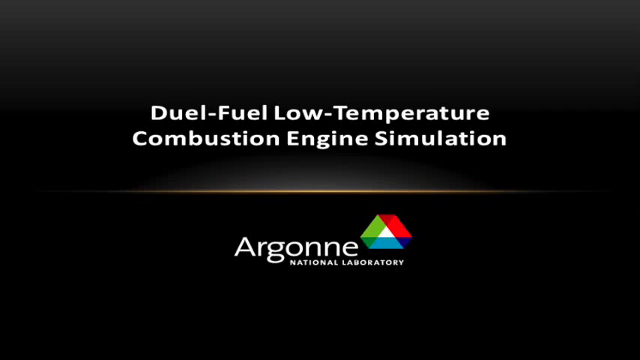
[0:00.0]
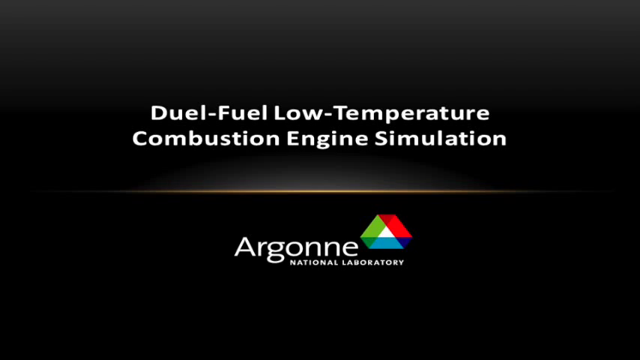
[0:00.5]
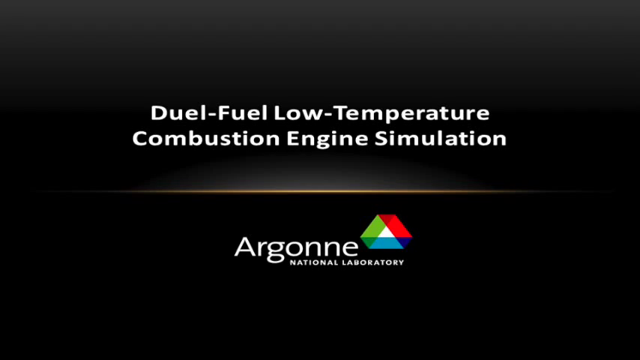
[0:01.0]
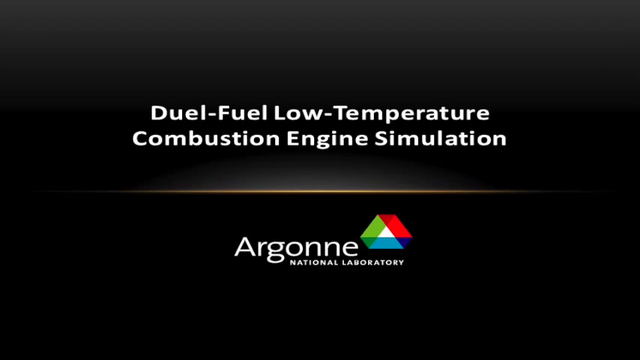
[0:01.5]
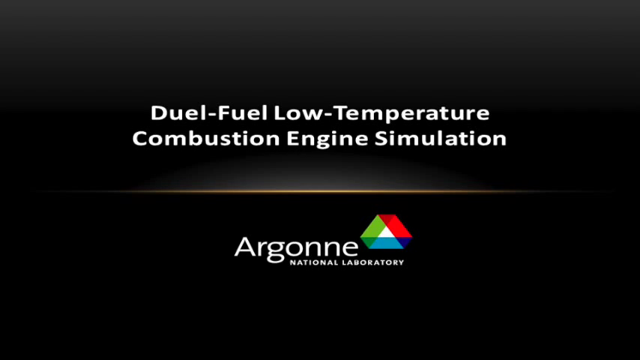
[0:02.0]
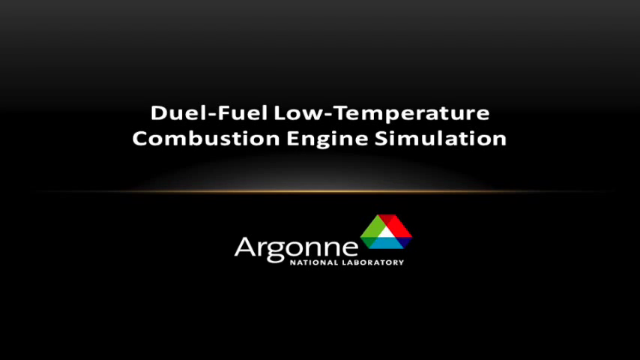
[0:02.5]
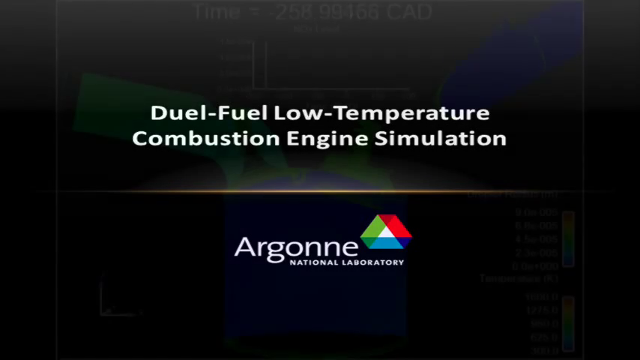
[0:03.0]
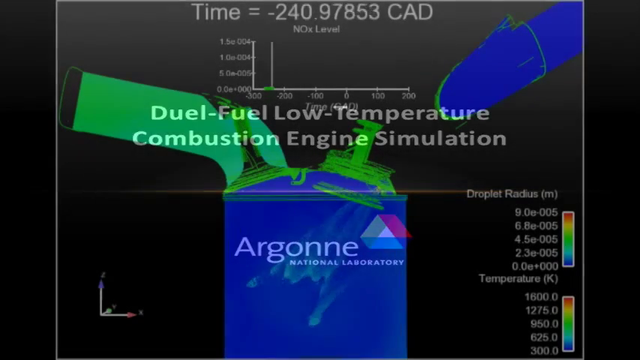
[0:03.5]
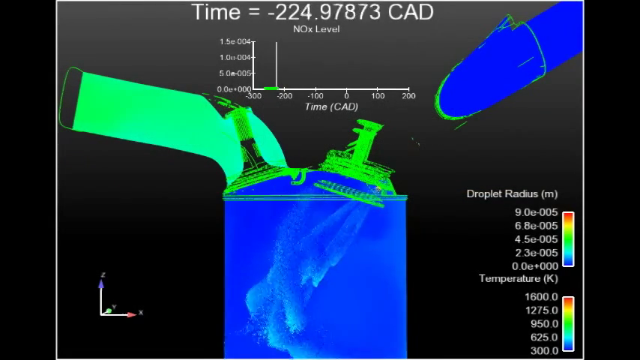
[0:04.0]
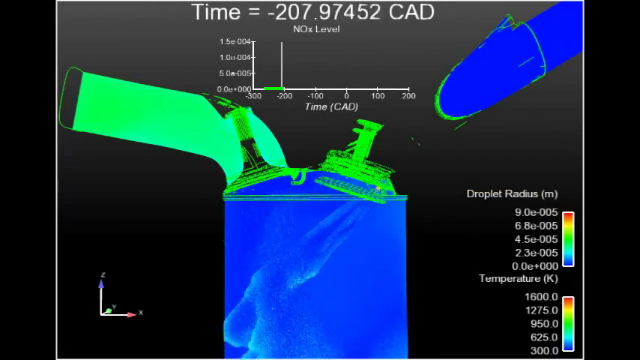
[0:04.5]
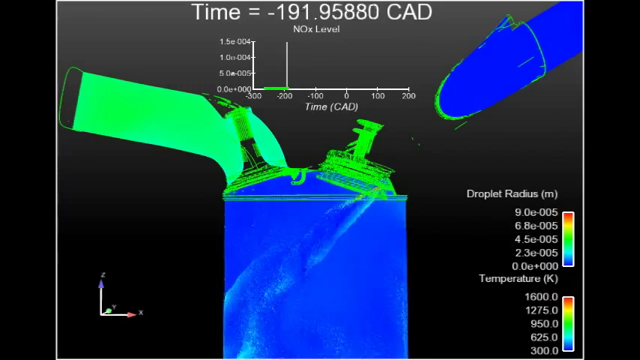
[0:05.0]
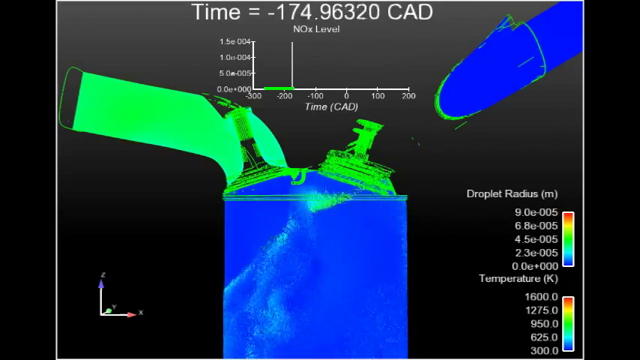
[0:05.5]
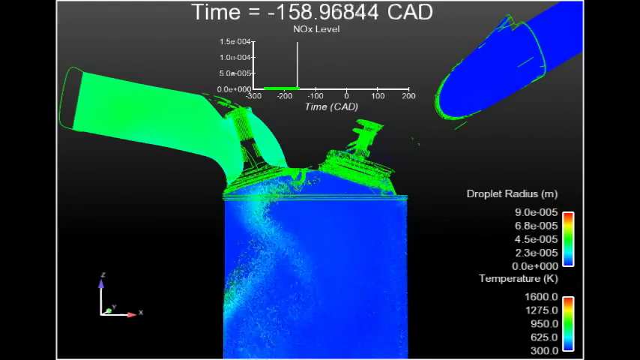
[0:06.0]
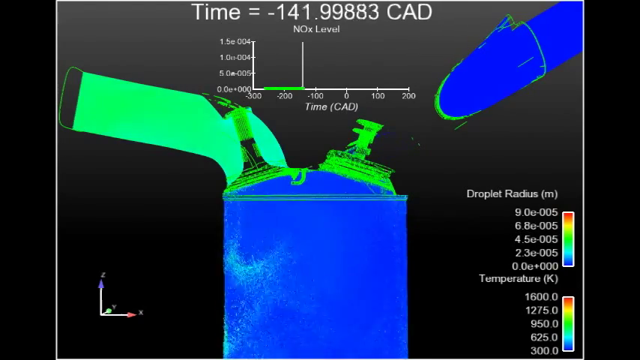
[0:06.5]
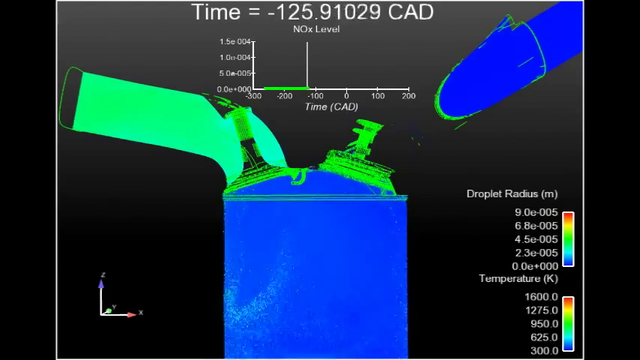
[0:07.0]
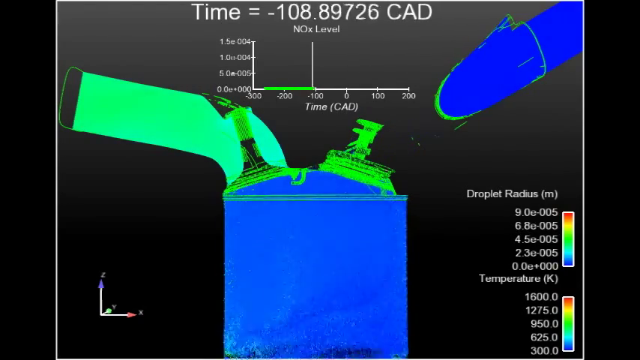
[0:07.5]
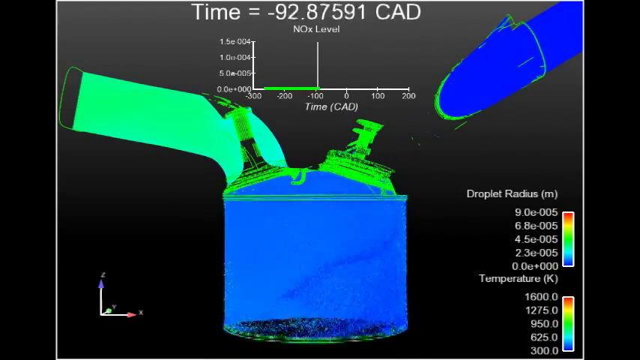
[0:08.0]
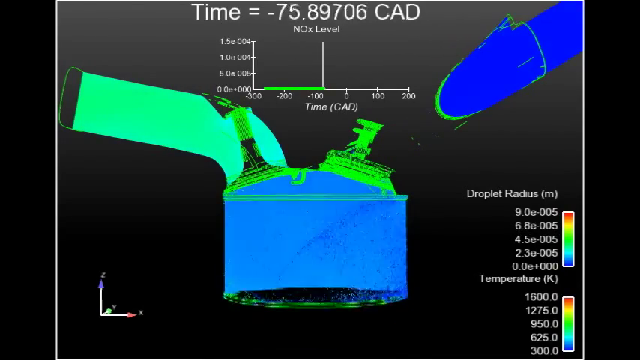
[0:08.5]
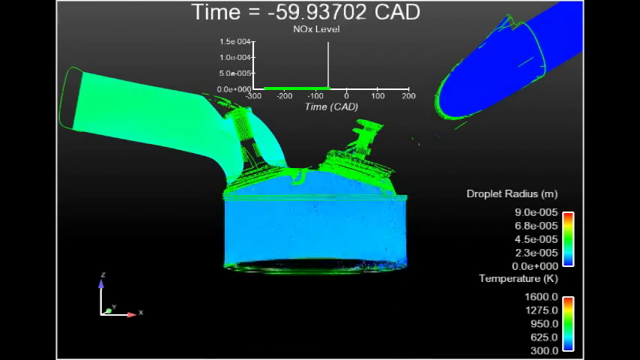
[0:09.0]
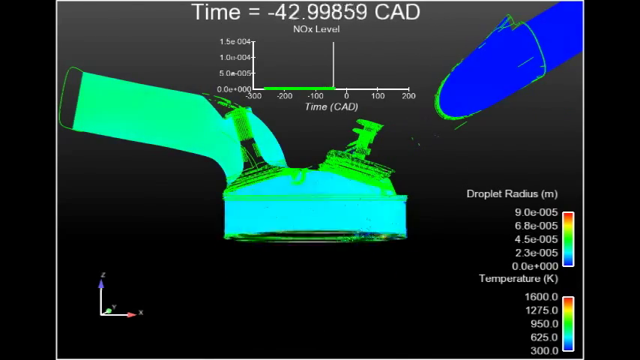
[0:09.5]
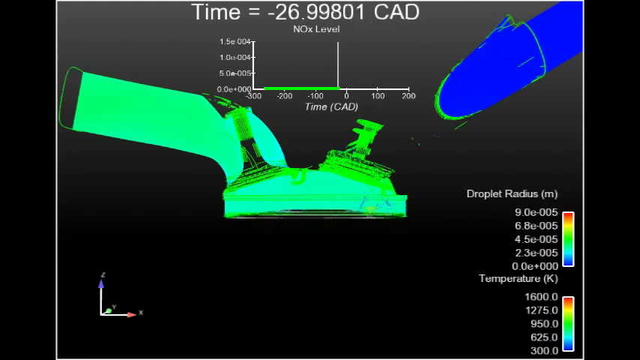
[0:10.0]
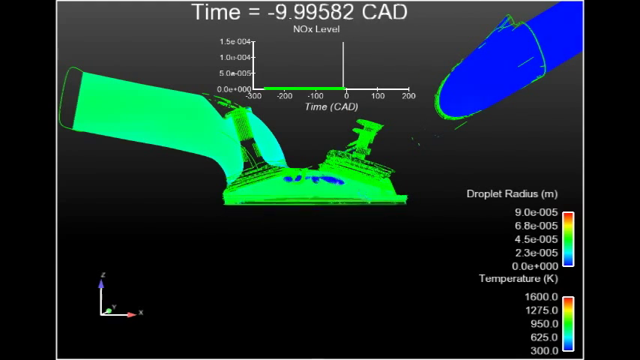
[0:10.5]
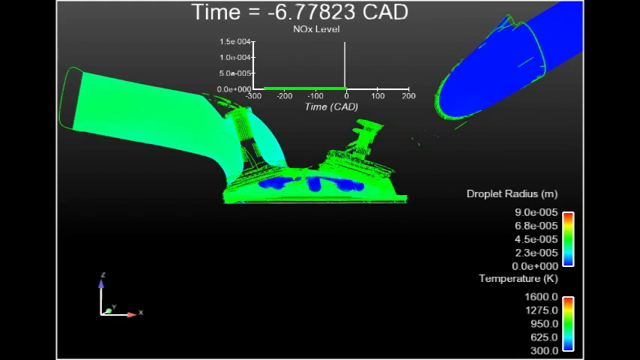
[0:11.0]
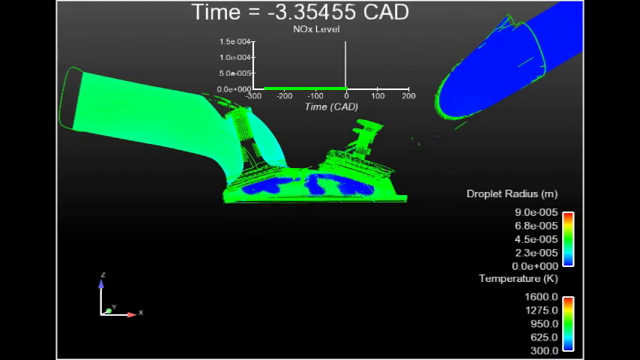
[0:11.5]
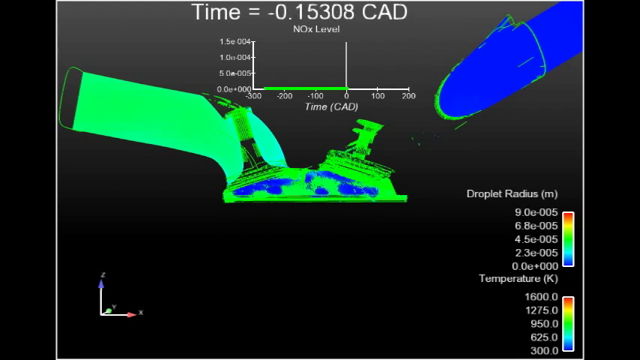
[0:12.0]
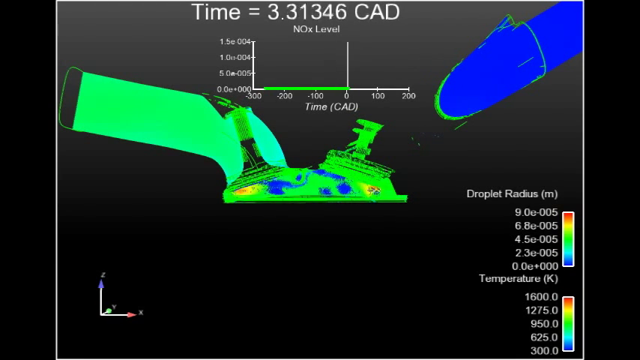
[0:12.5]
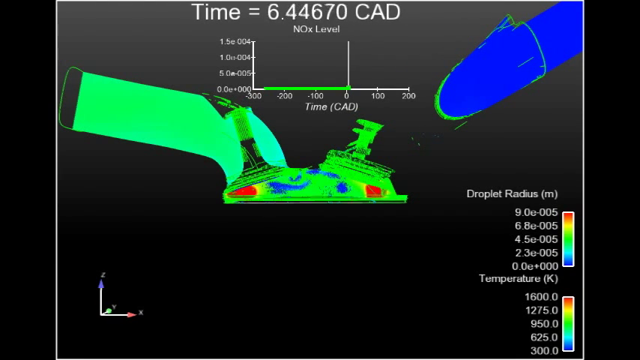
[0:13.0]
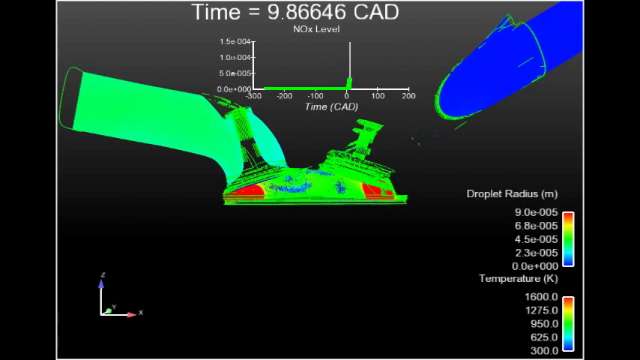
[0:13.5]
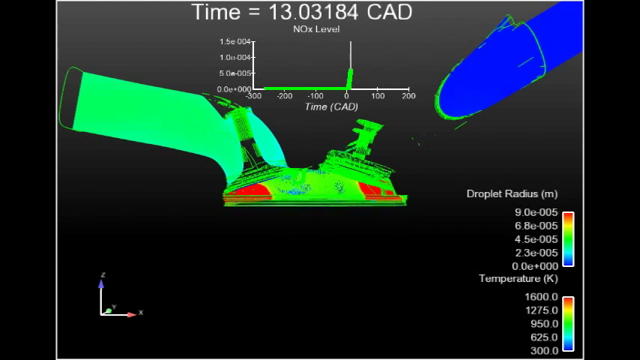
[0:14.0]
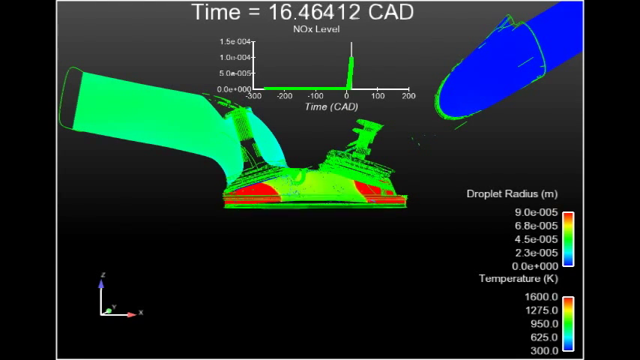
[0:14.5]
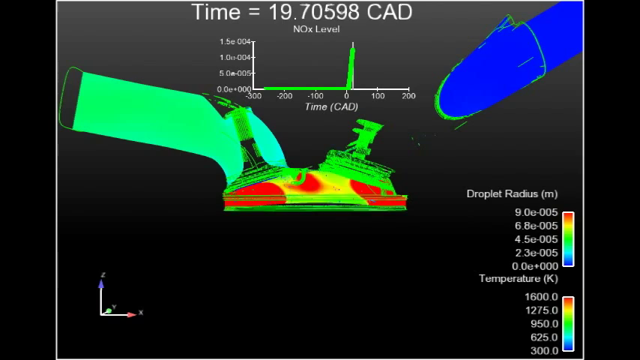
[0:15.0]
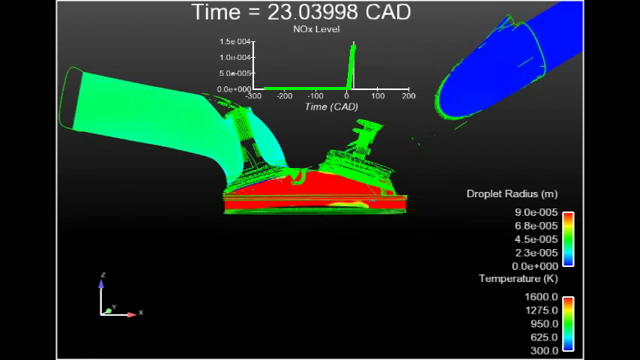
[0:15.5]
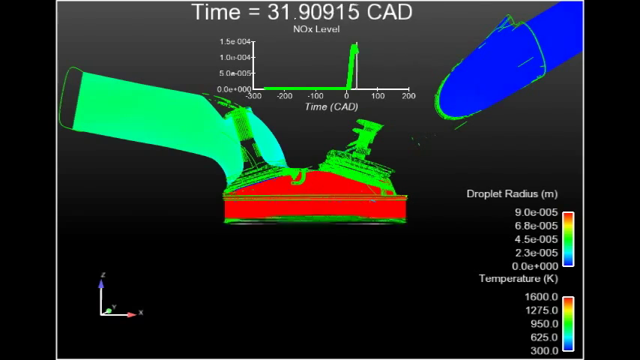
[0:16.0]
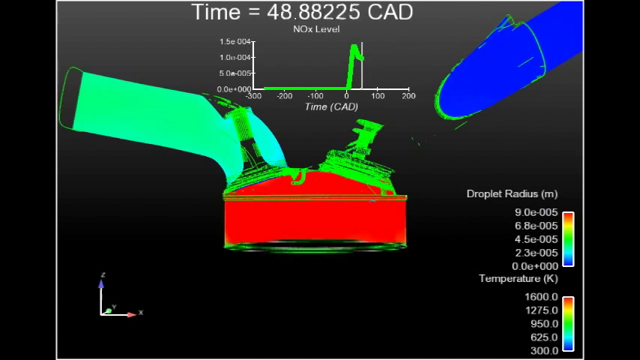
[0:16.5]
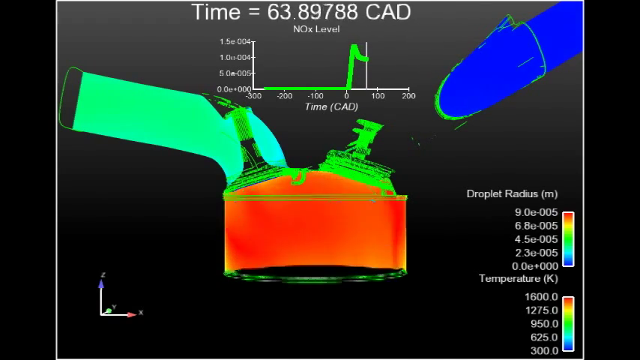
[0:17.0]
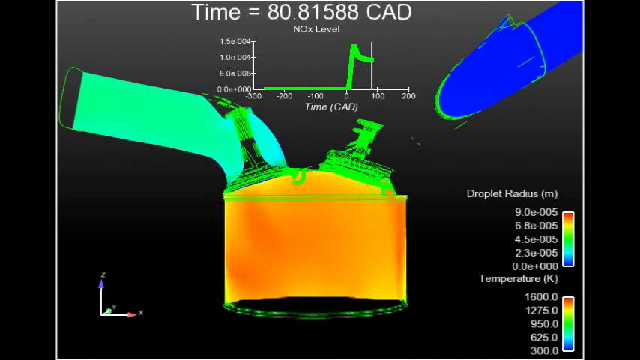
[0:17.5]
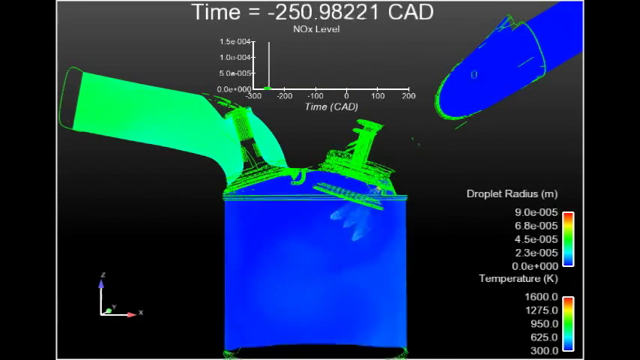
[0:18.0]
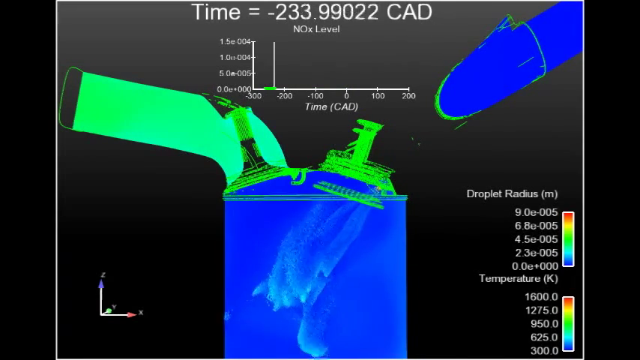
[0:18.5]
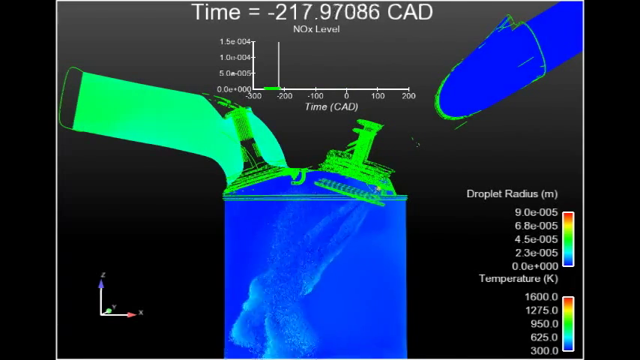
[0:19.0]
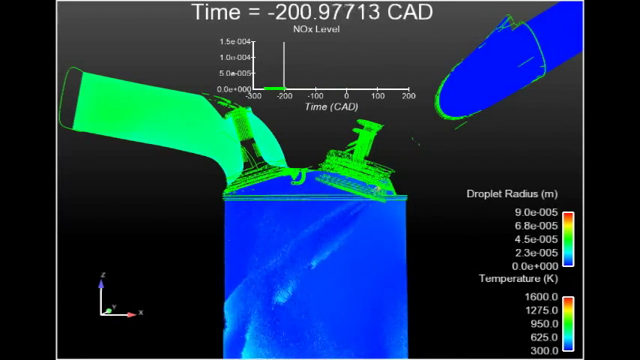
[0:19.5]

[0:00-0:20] Computer graphics appear, seemingly for some kind of laboratory or energy company. Text on the screen reads "Dual fuel low temperature combustion engine simulation," and below it "Argonne National Laboratory" with a logo that is almost trapezoid-shaped and colored red, green and blue. The video then cuts to what looks to be a graphic possibly simulating an engine or motor, perhaps its interior. It is almost shaped like a jar or canister and is blue and green at first, then the main body of the graphic transitions to red, apparently to simulate the combustion process. At the top, a counter counts down, possibly tracking the time the combustion process takes.